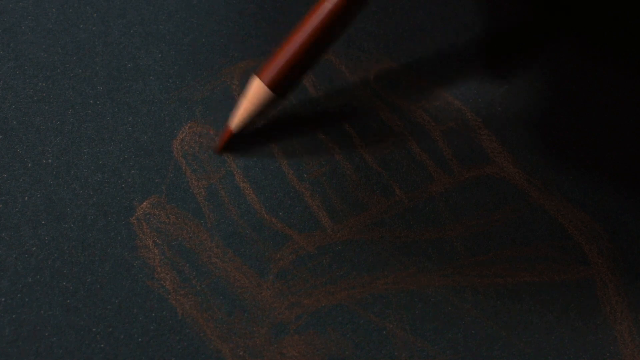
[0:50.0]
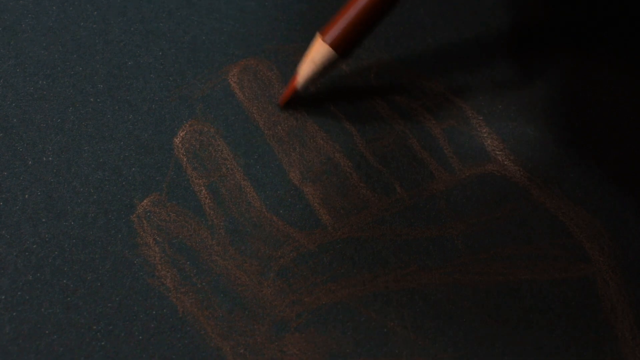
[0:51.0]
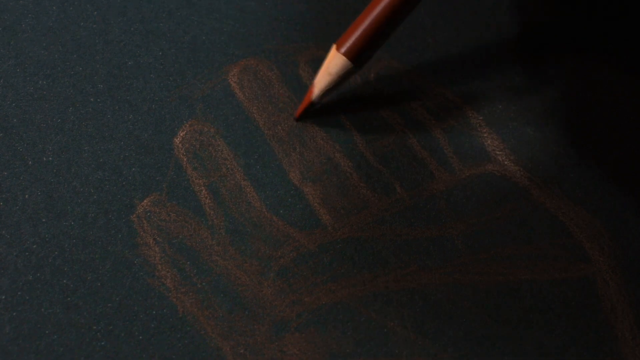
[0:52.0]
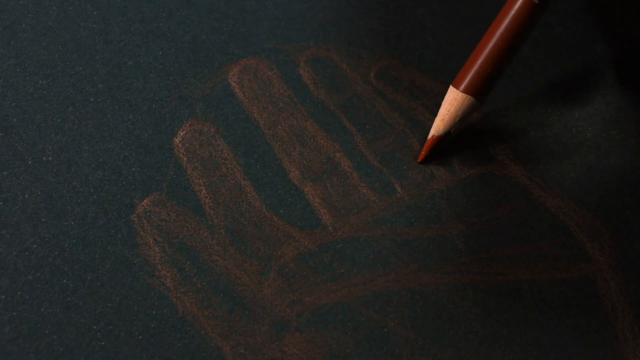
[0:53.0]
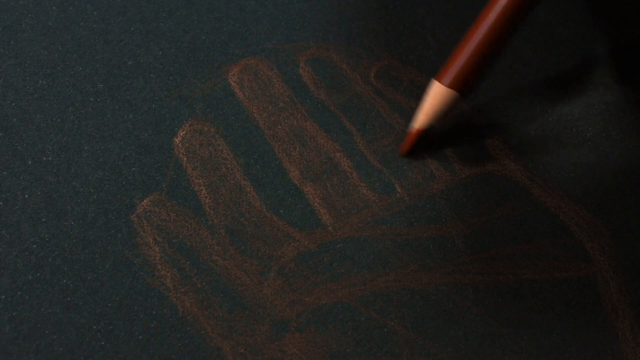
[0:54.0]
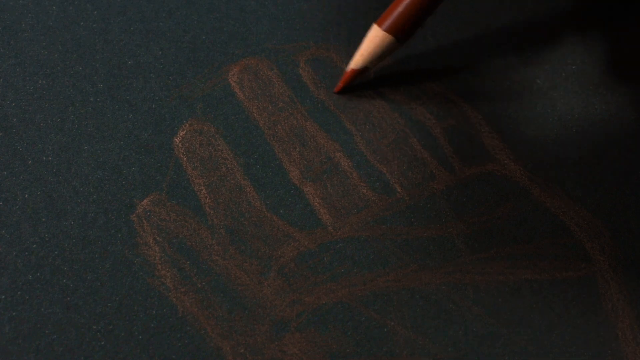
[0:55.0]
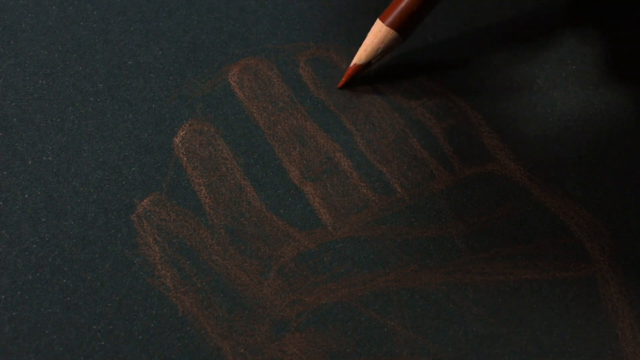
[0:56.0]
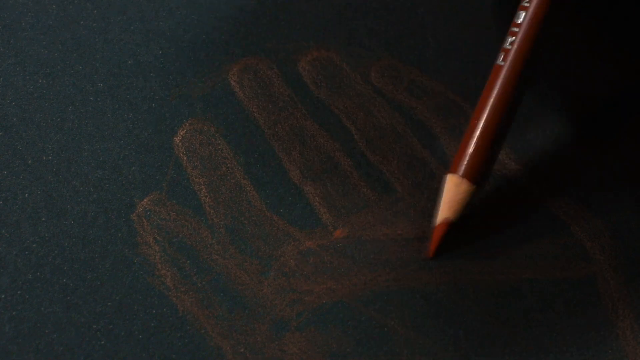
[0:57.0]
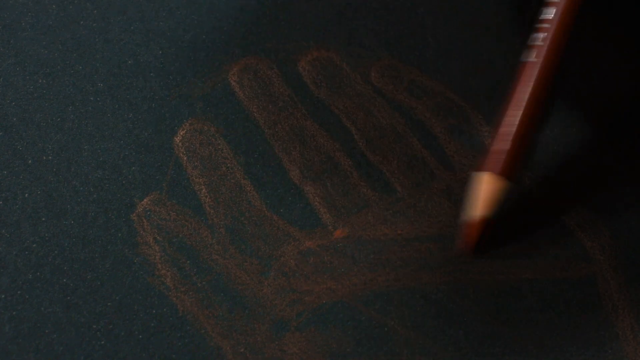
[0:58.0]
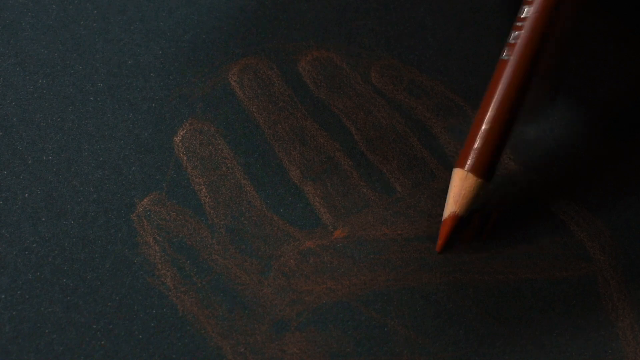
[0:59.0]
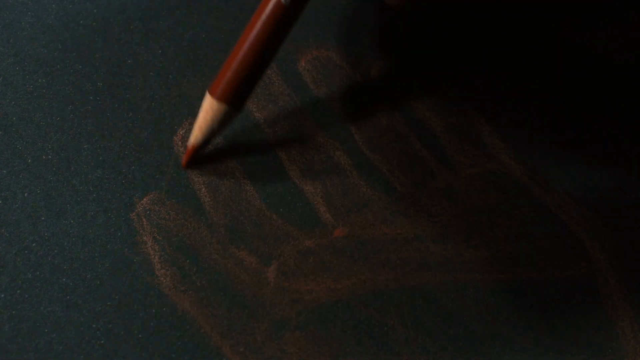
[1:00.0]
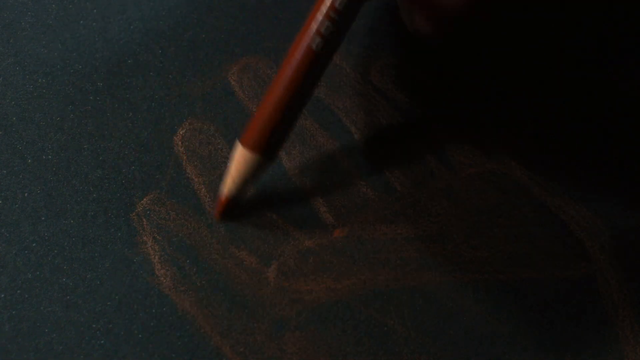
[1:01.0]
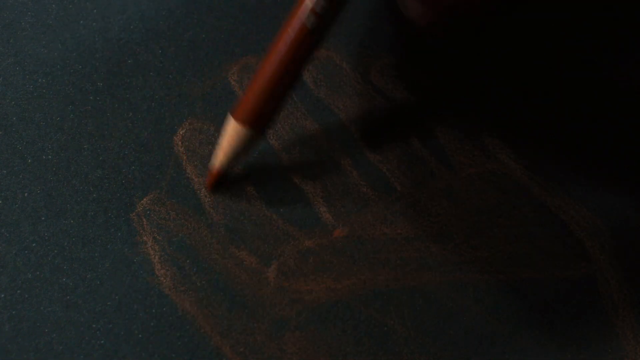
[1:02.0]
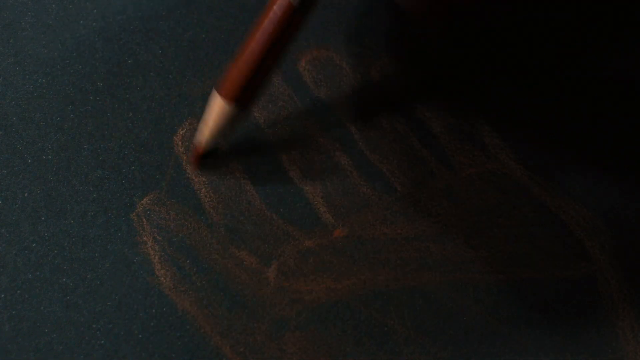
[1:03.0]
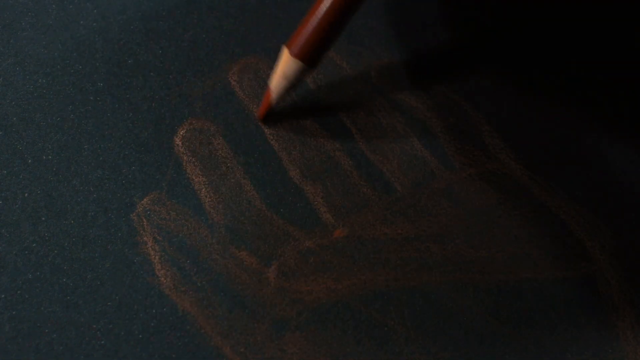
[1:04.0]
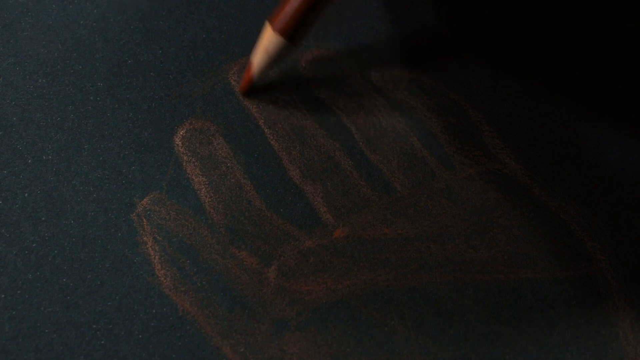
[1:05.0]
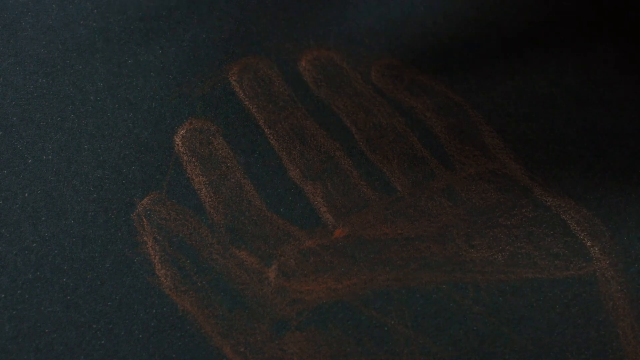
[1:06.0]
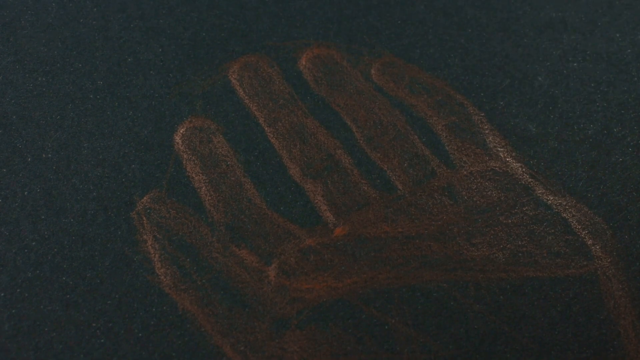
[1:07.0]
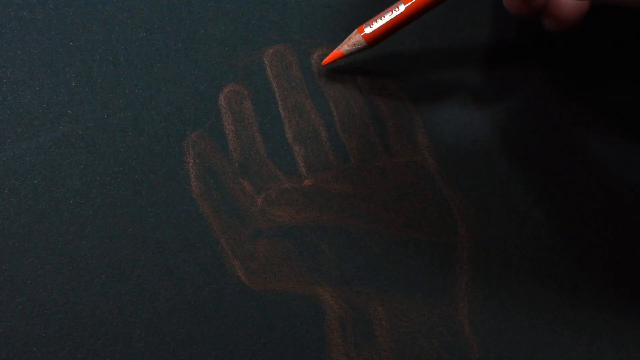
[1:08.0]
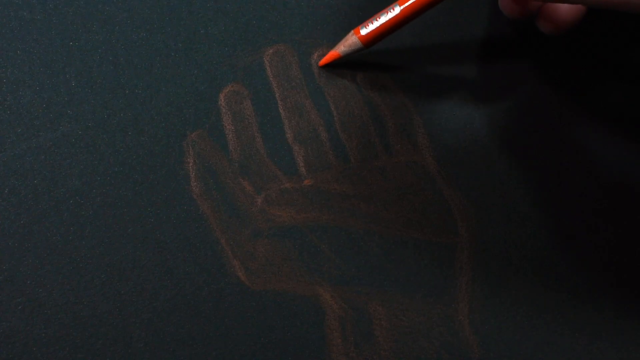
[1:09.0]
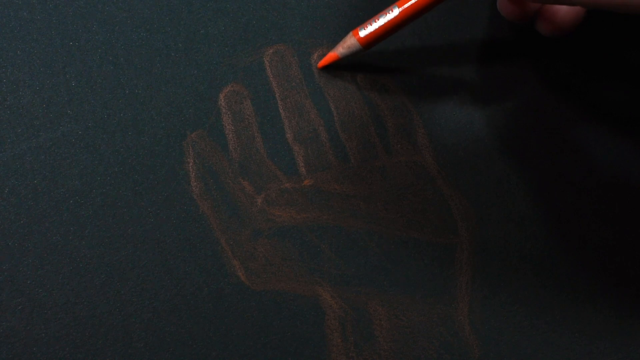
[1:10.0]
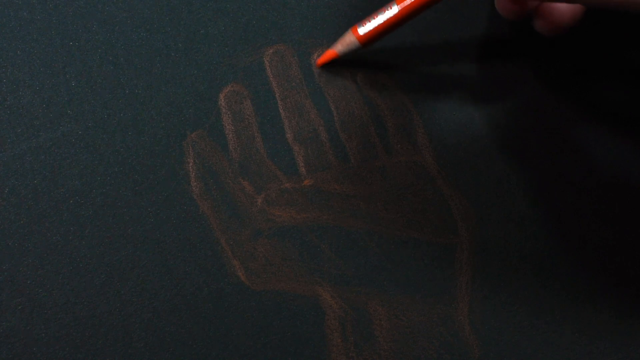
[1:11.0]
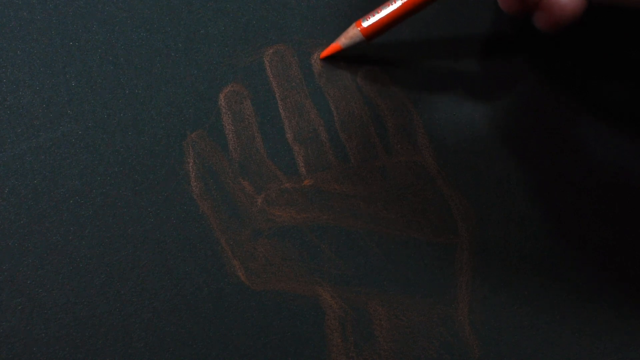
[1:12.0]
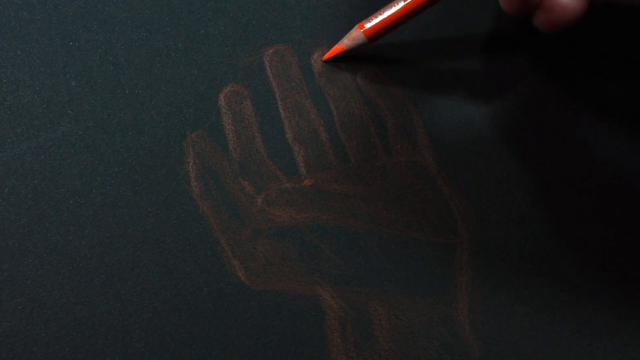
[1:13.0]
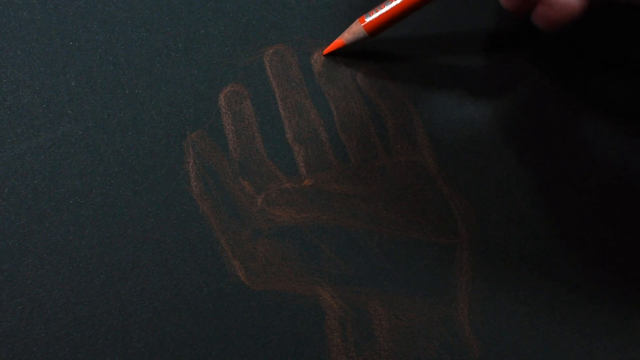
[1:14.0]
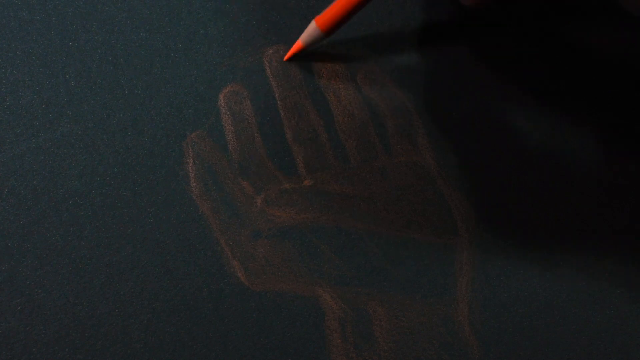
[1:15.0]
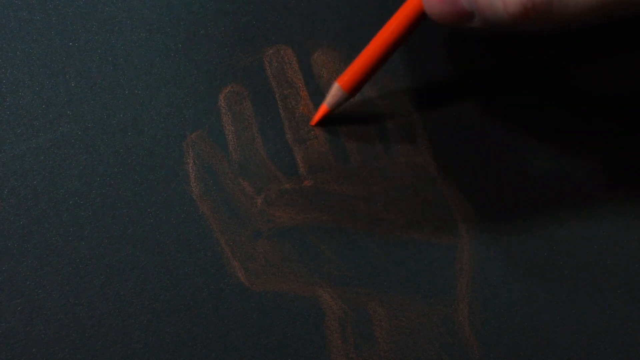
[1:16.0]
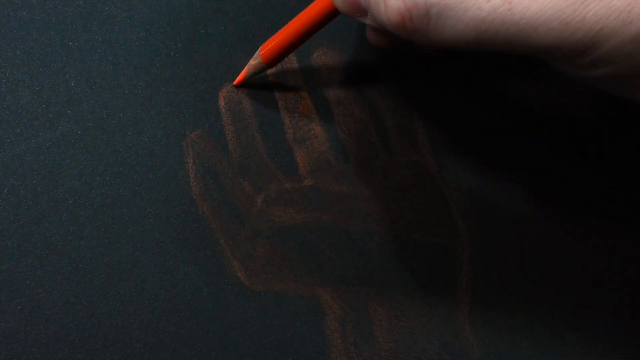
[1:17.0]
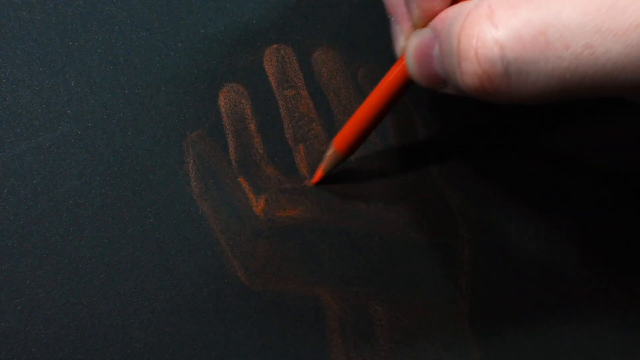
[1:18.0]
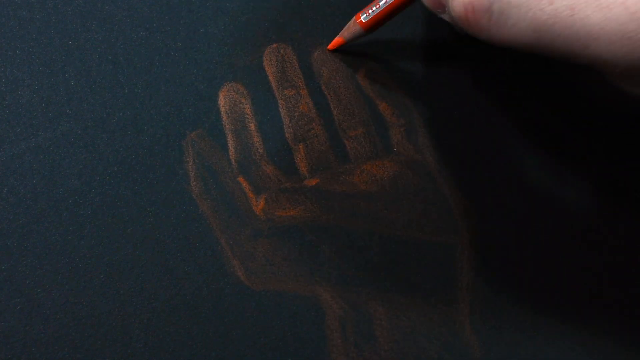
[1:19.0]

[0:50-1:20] Three candles are visible. The man picks up a matchstick and lights the three candles, then places them around the book on a glass table. He seems to be setting a relaxing scene for himself to start drawing. He picks up a feather pen and starts writing on the black cover of the book in white, and at the end a quote reads "A painter should begin every canvas with a stencil." Three colour swatches follow, one green, one orange and one white, and the camera zooms in on them. On the blank white space there are also three swatches, one black, one orange and one red. The man then appears to be outlining a picture on very dark paper, but it is difficult to see.